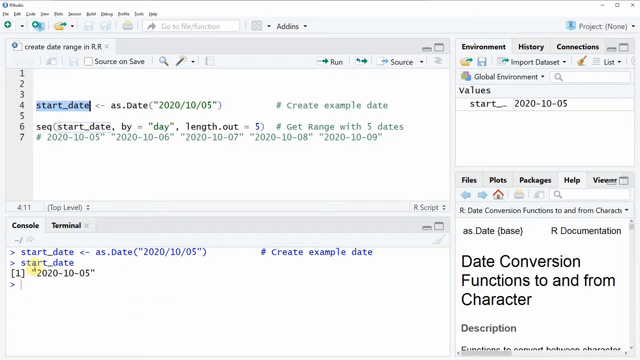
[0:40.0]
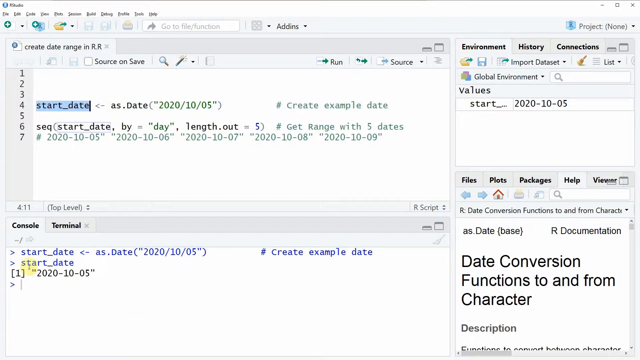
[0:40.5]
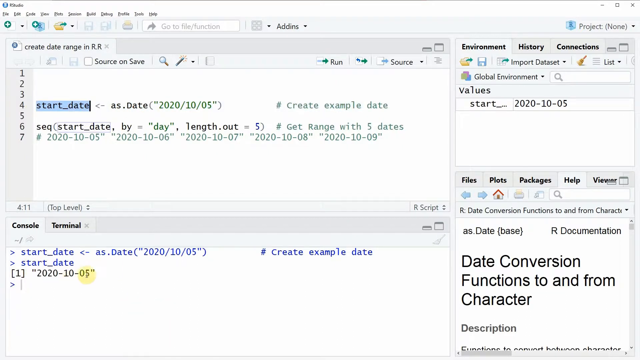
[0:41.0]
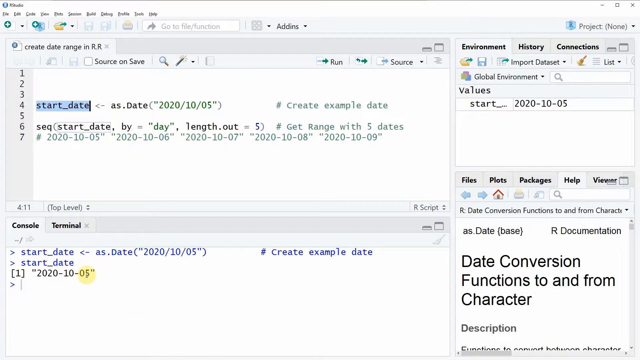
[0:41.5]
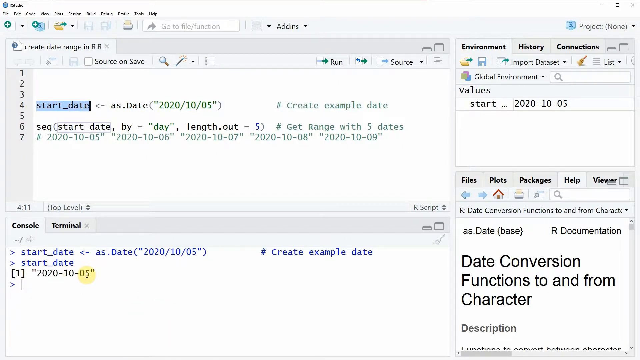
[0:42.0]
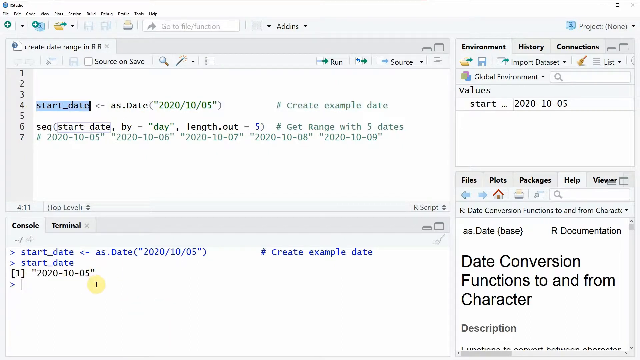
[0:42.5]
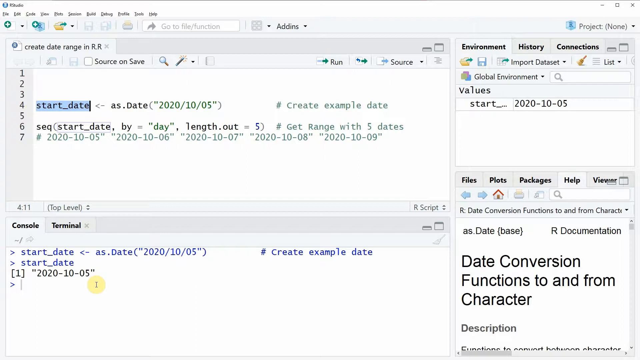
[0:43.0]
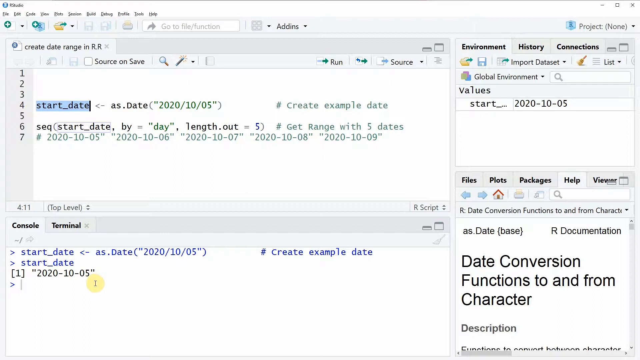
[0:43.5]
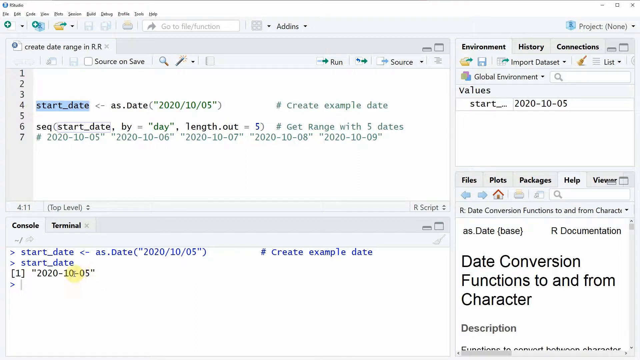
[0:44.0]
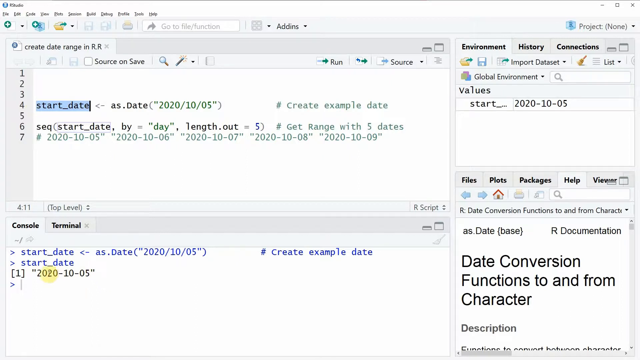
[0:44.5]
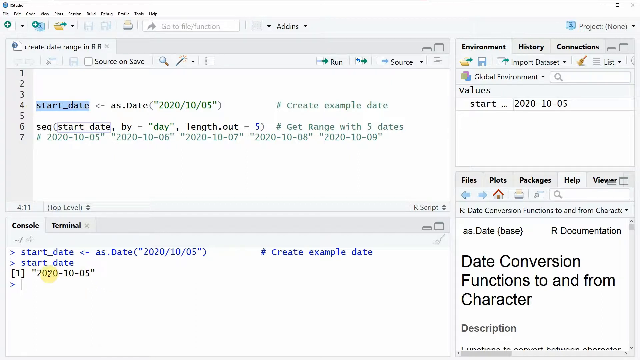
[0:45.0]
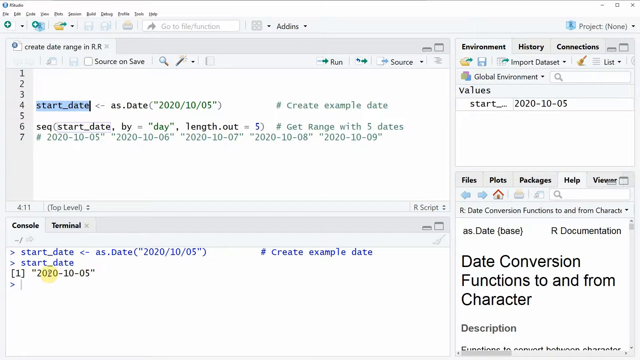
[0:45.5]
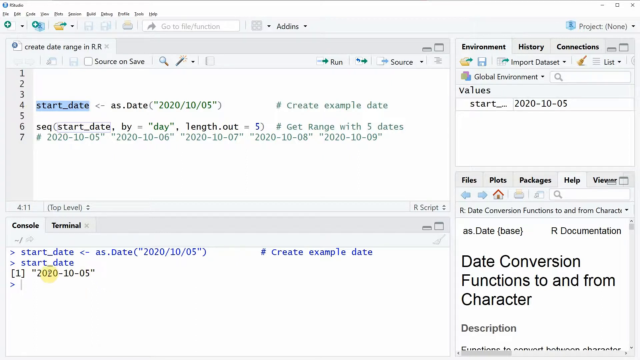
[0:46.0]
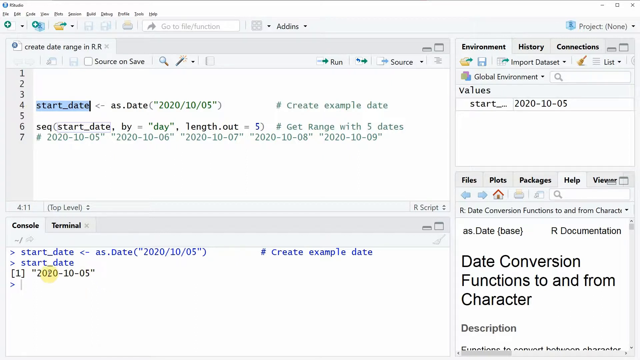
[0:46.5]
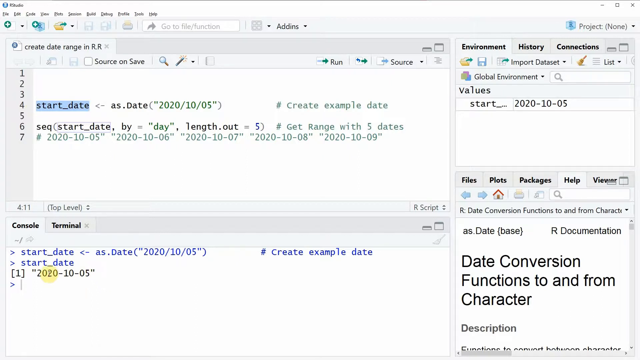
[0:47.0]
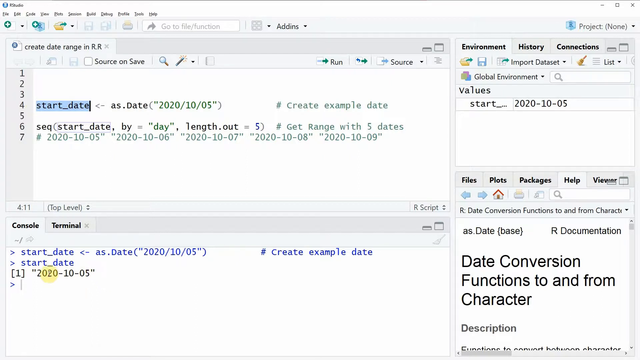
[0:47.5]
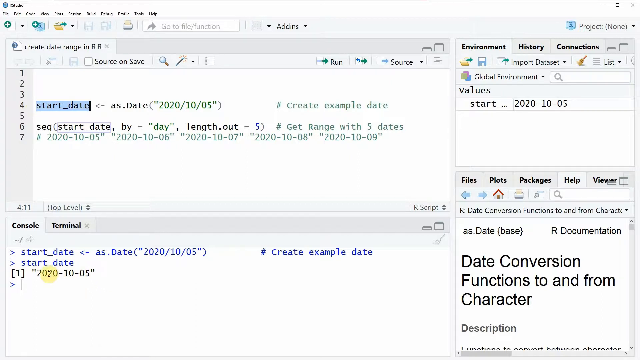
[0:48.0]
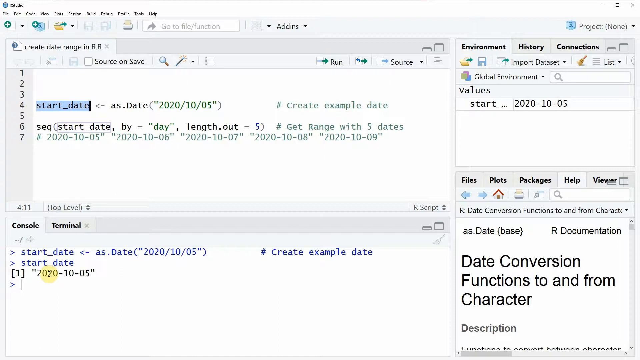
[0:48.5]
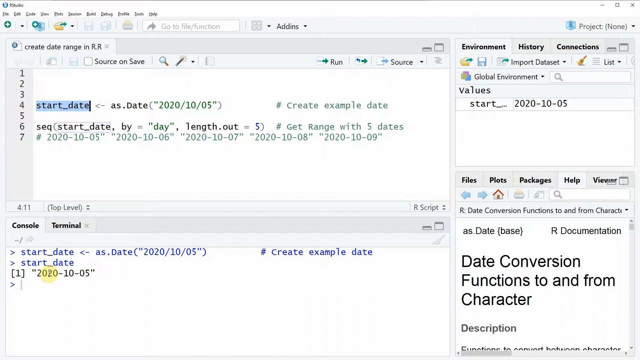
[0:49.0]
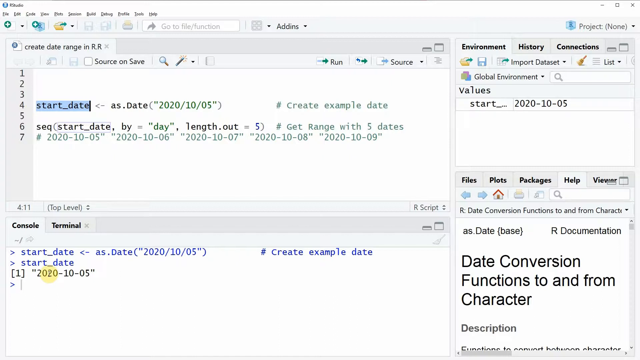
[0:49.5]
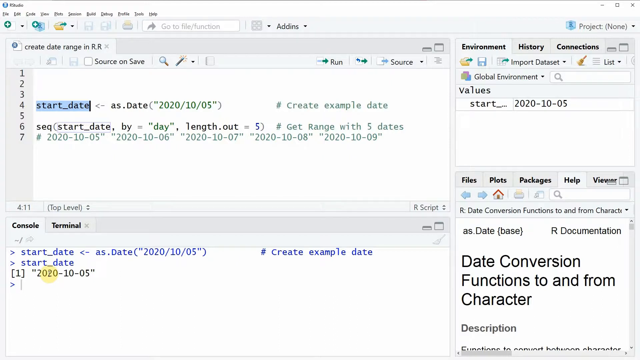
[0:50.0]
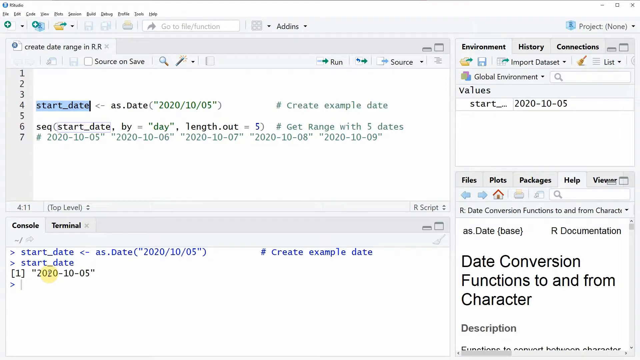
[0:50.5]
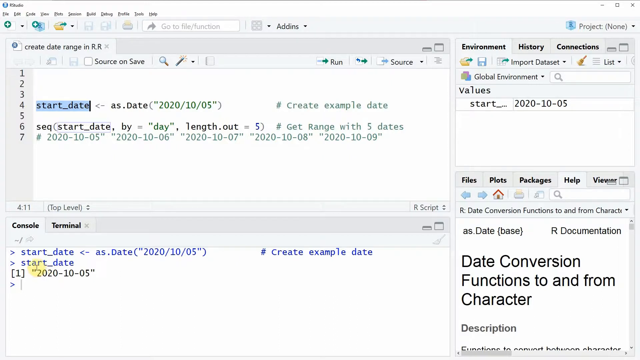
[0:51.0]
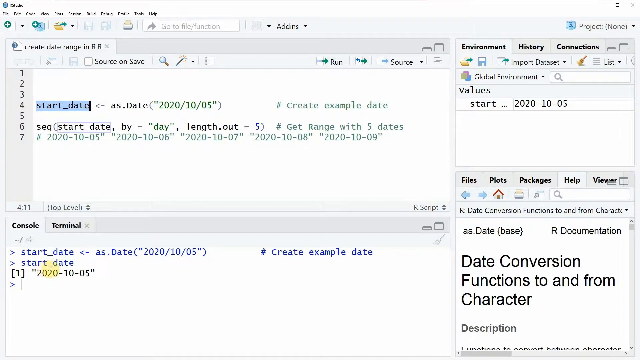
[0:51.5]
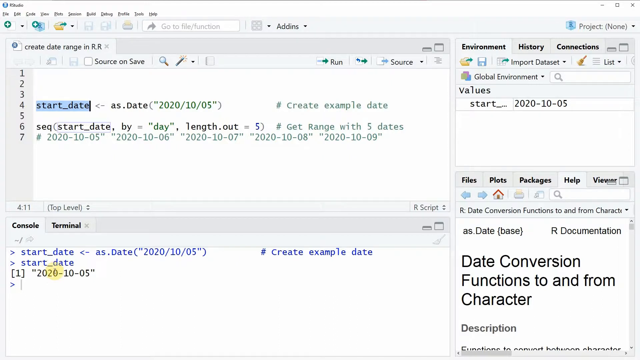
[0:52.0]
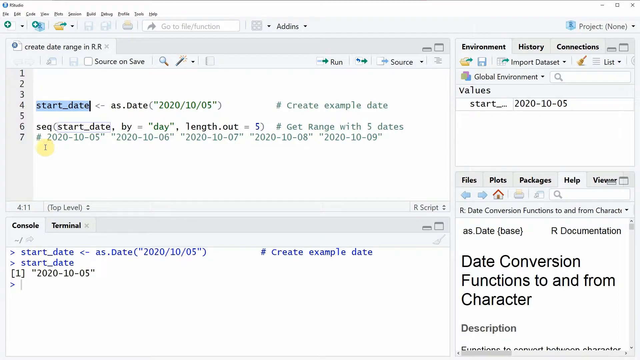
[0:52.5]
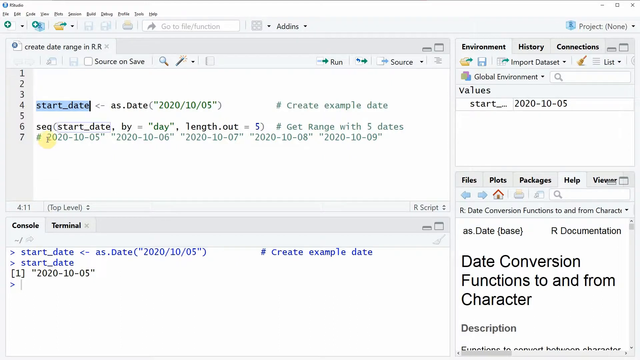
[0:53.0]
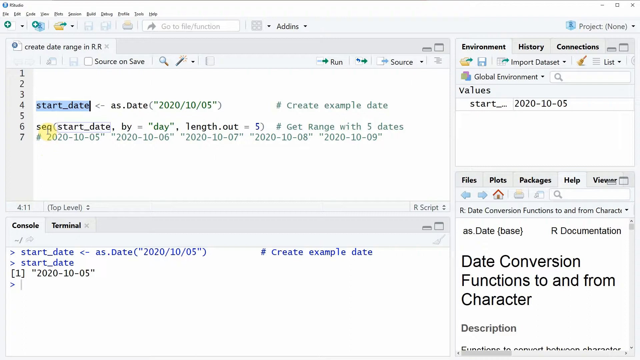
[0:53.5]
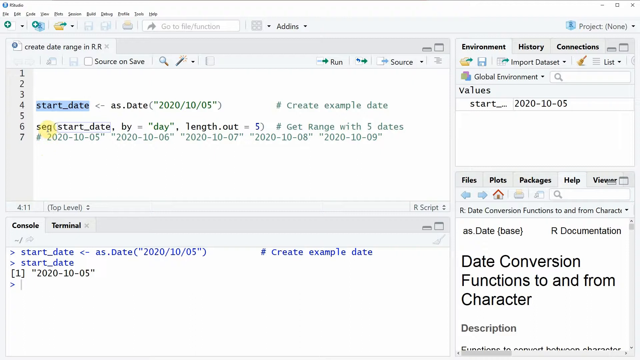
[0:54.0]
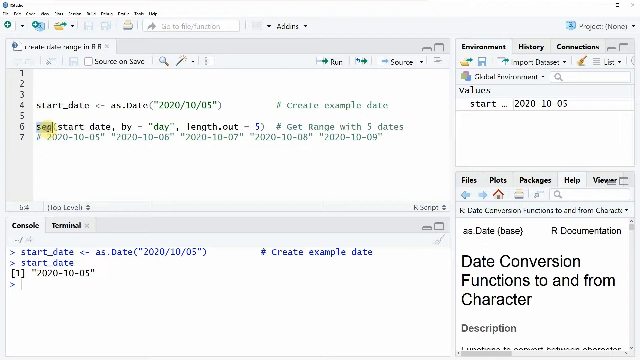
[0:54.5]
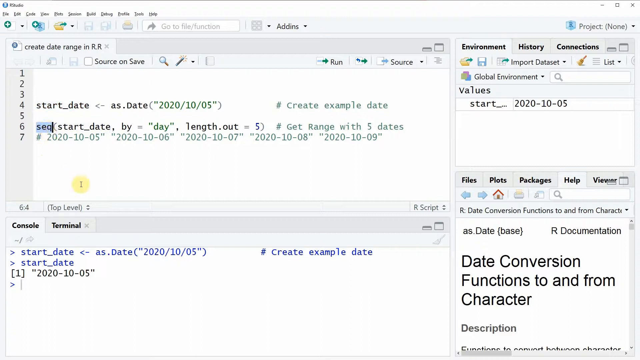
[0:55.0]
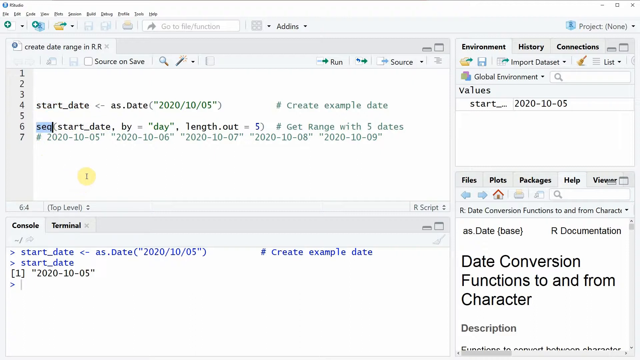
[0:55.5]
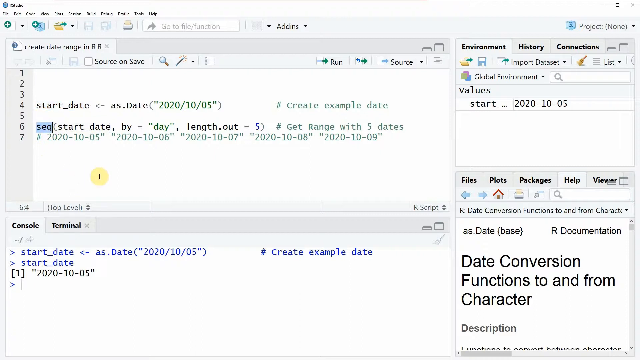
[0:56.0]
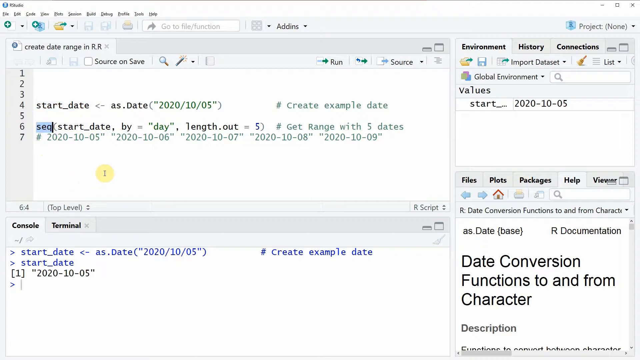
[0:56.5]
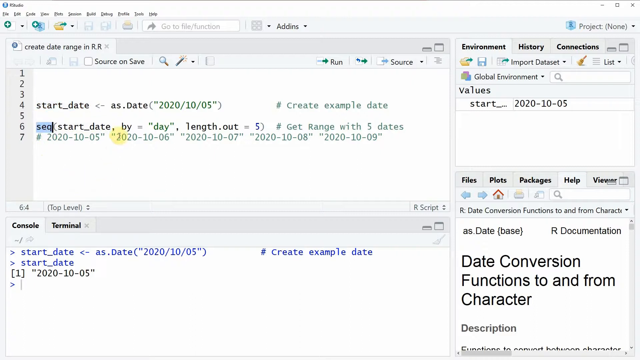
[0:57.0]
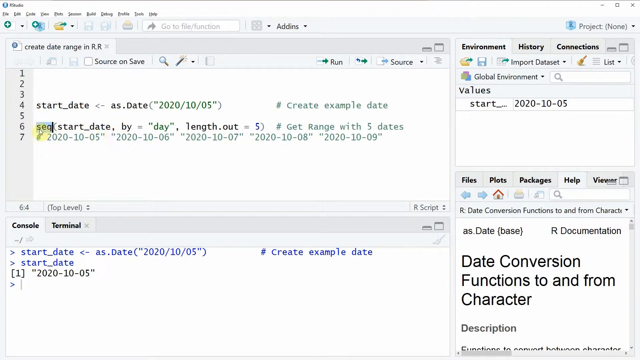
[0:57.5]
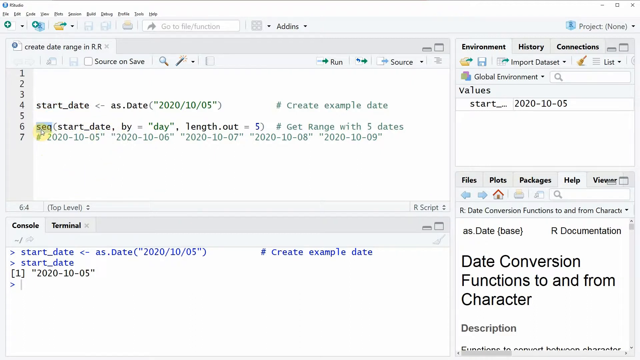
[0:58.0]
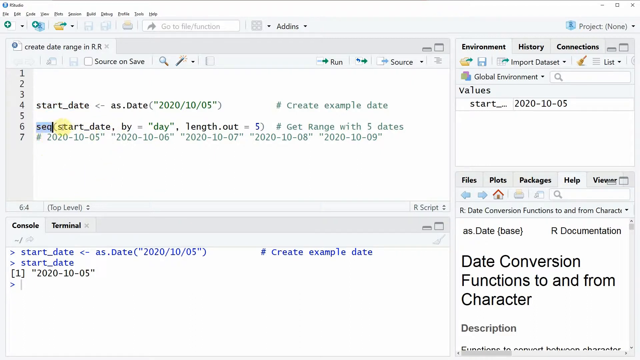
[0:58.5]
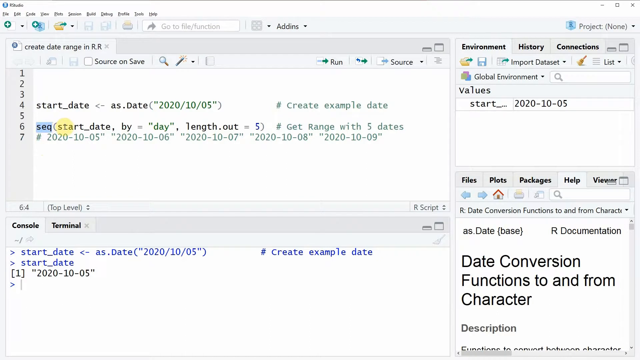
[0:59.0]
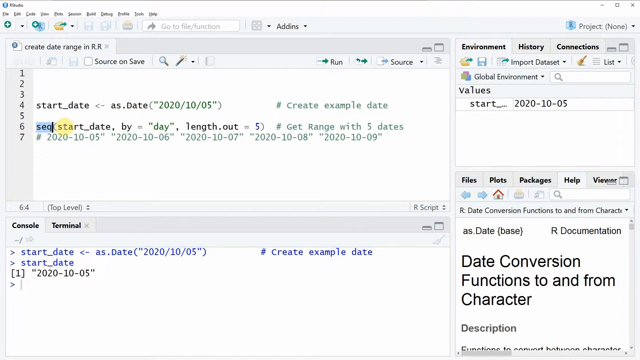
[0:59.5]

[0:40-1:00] Code fills the left-hand side of the screen, while the right-hand side shows text and descriptions. The code contains numbers, ranges and open and close parentheses in several colors, and certain parts are highlighted while others are not.